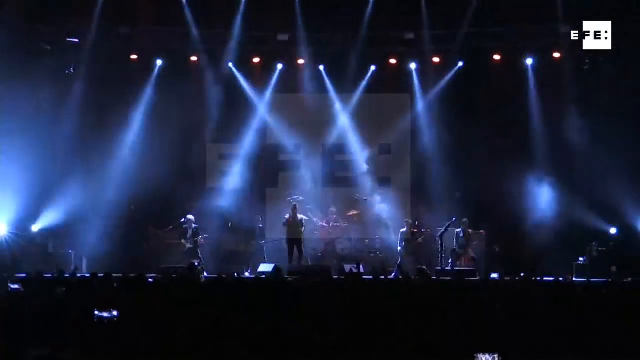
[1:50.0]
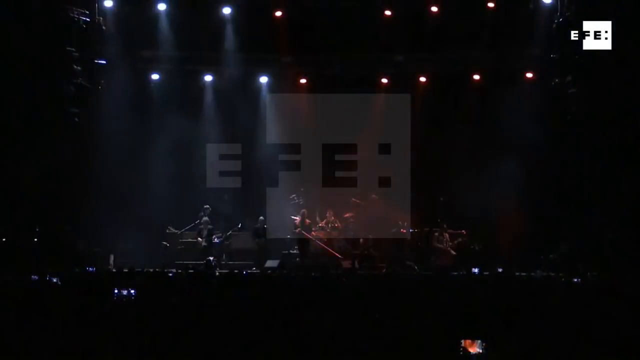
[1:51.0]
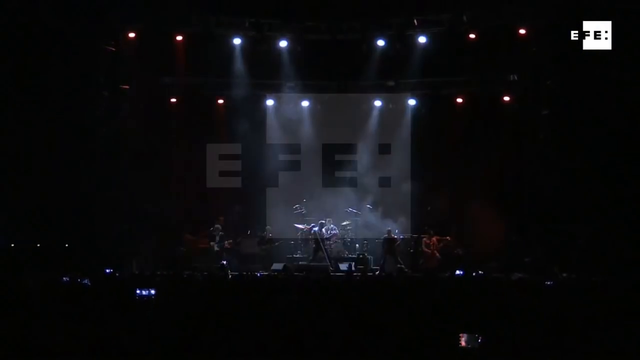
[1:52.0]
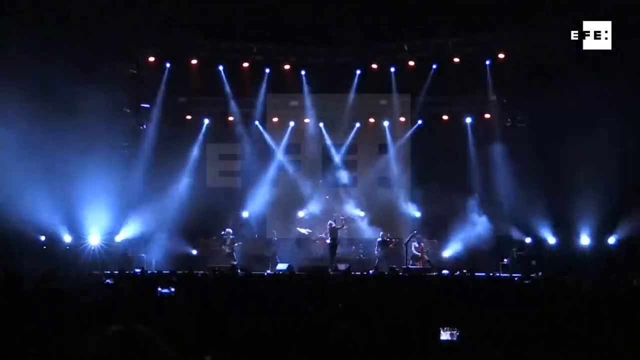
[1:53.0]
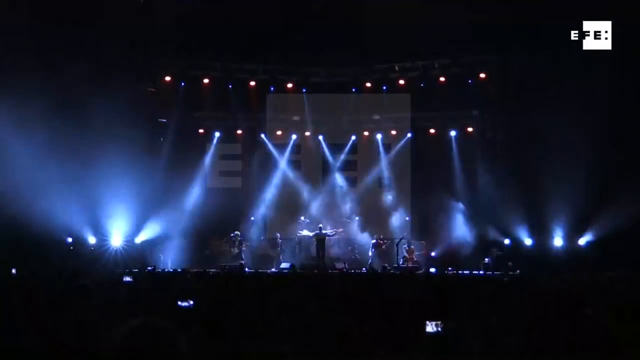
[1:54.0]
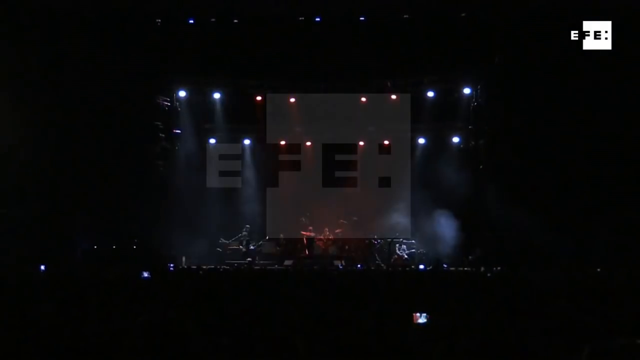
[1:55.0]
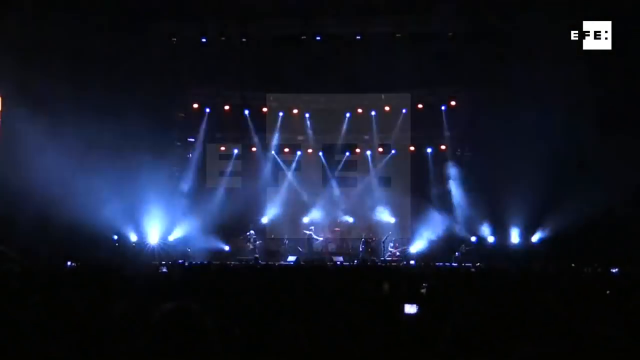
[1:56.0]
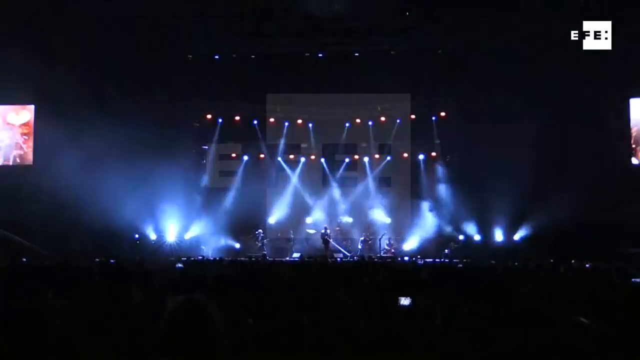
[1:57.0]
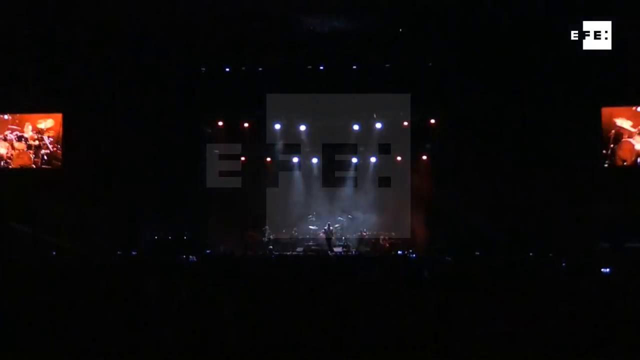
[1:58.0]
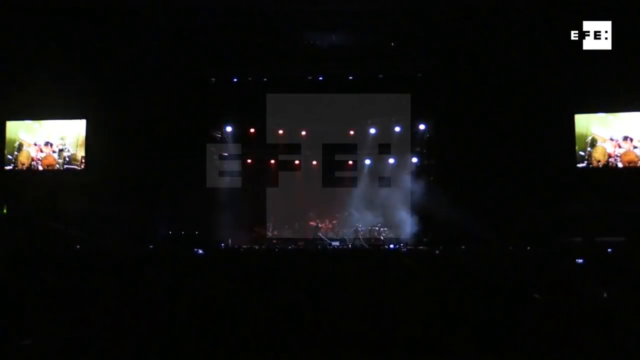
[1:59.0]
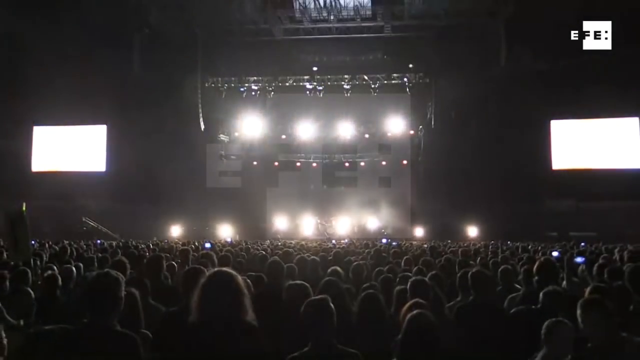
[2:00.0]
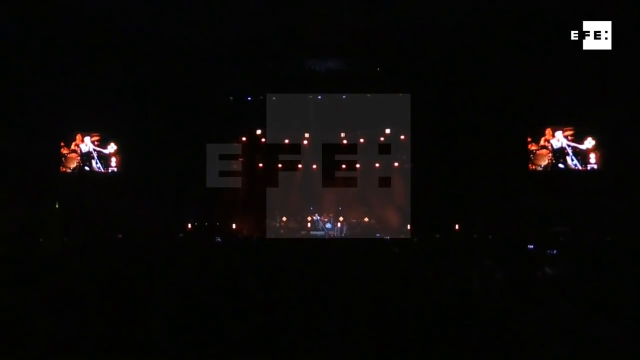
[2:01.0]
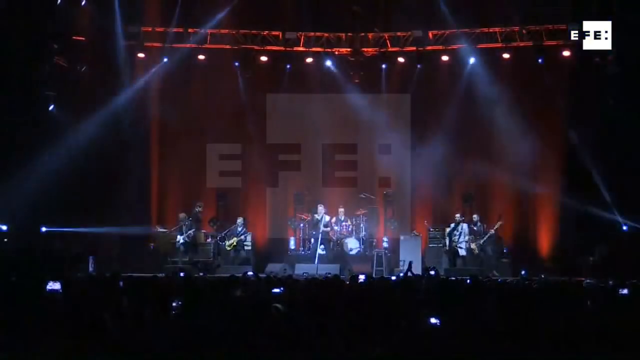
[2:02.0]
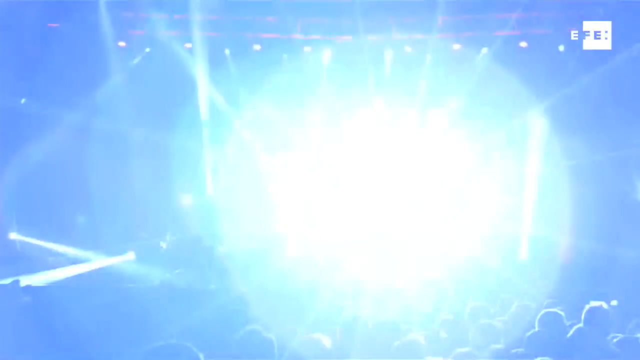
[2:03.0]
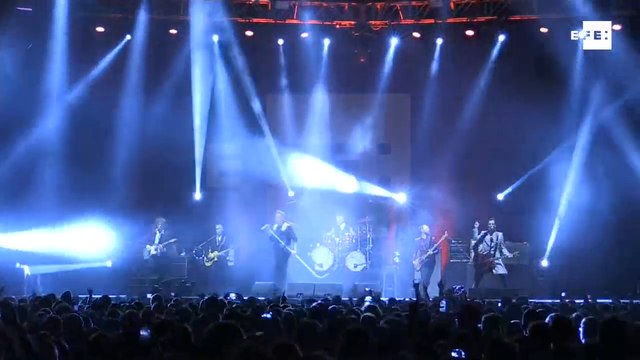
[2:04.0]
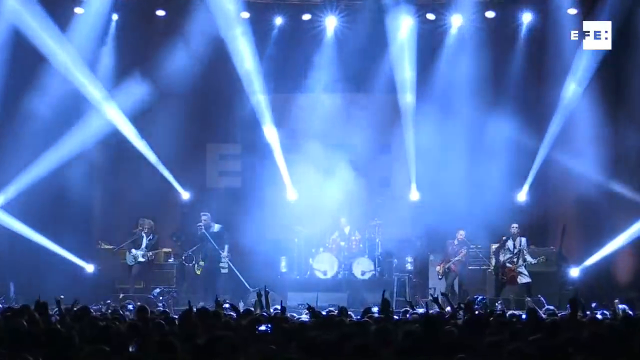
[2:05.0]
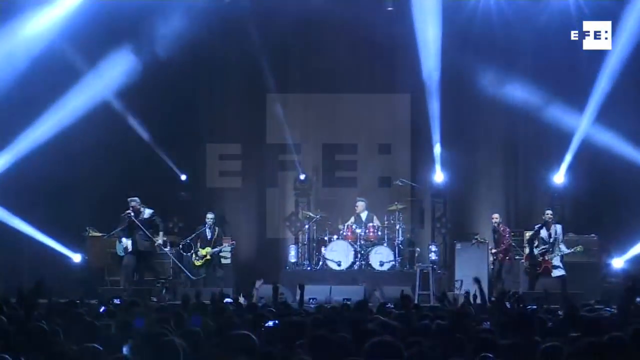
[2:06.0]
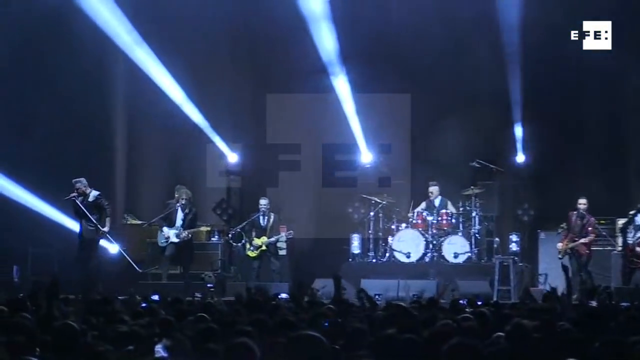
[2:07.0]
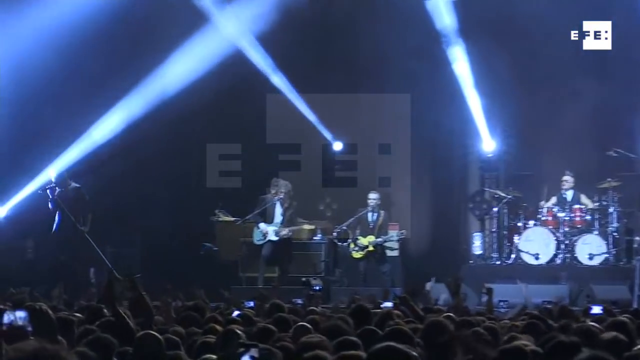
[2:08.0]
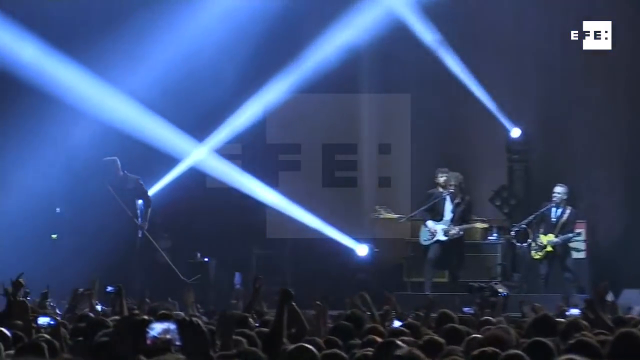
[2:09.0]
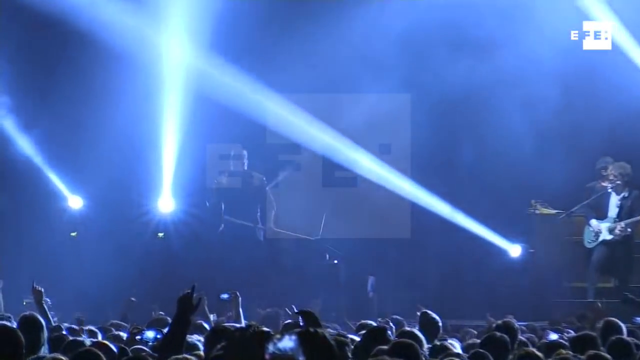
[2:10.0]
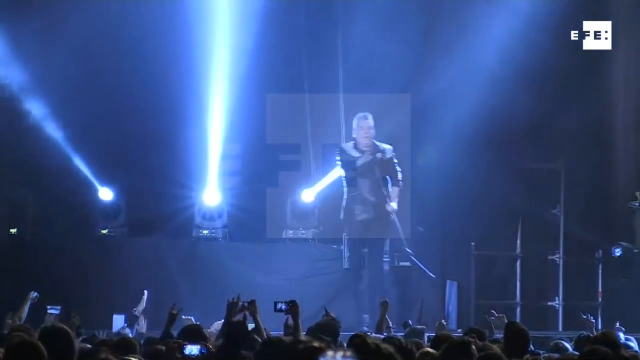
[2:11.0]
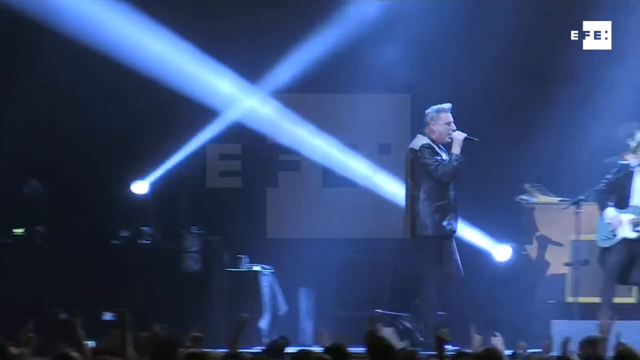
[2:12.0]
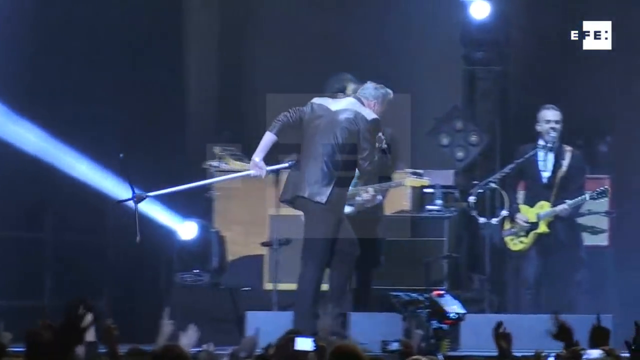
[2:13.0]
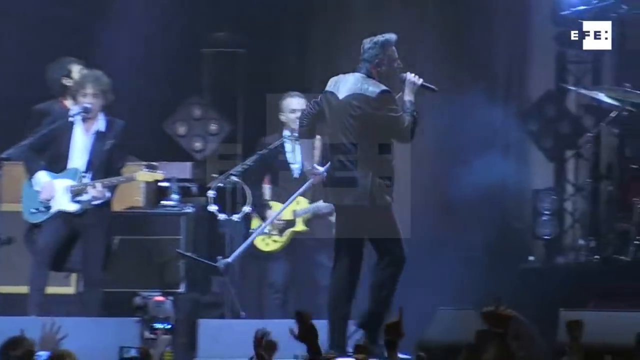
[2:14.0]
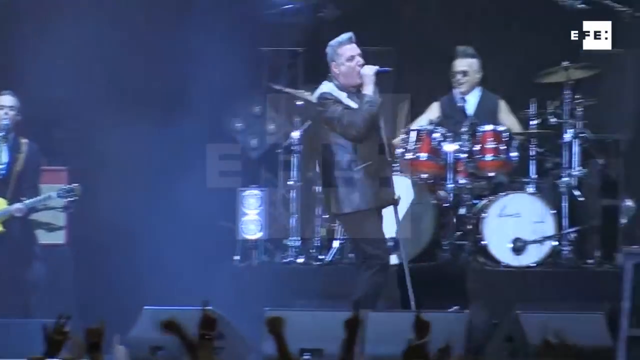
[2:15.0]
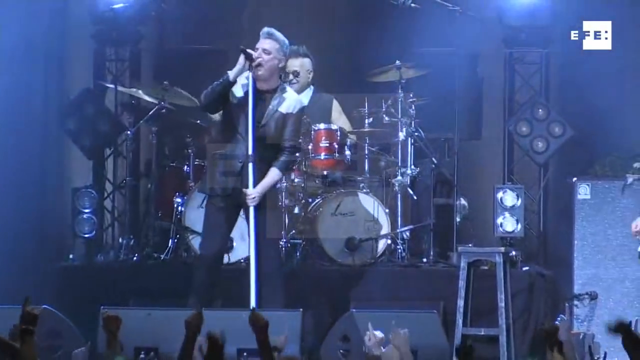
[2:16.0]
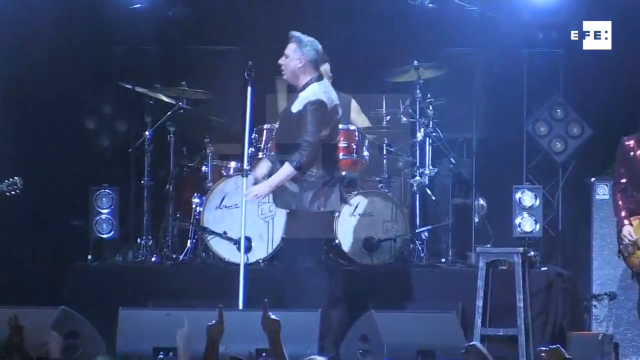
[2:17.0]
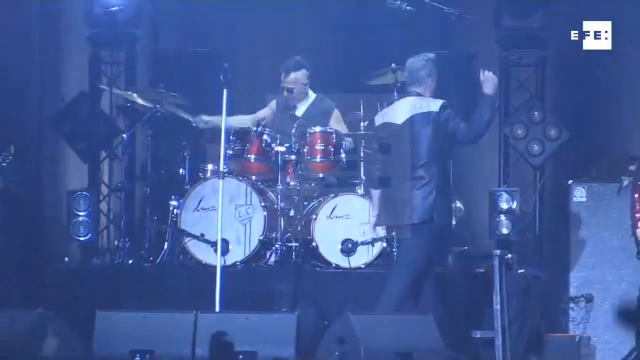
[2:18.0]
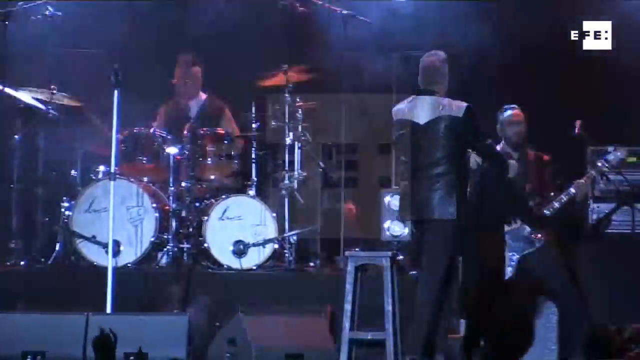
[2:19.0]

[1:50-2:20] Shot from far away, a man stands in the middle of a stage holding a microphone stand in his right hand. Behind him are a drum set and a drummer, and to his left and right two people hold guitars. Two rows of lights above him shoot down white beams. He takes the microphone stand and spins it around in the air. The camera keeps panning out, and once it is far enough out, monitors on the left and right sides of the stage show what is happening on the stage. The video then cuts to a shot closer to the stage showing the drummer, the singer and the guitarists standing on the stage. Lights flash all over the place, and when they flash, smoke is visible through the lights.